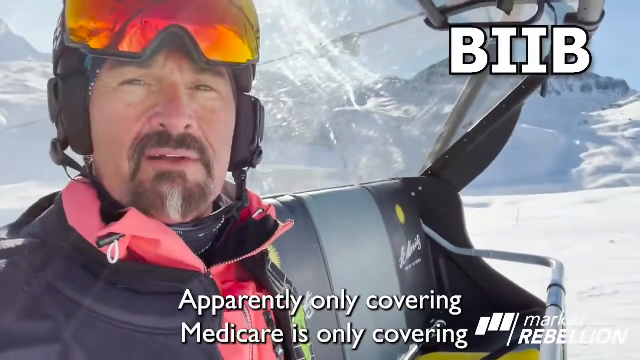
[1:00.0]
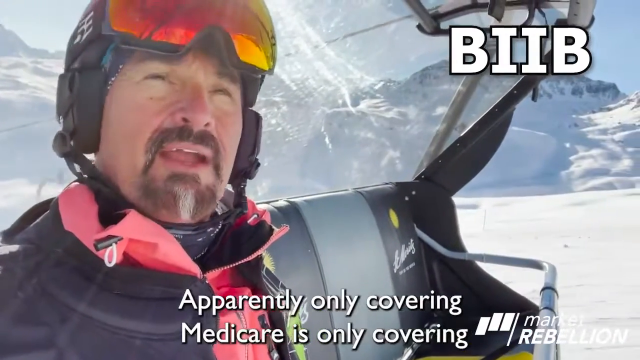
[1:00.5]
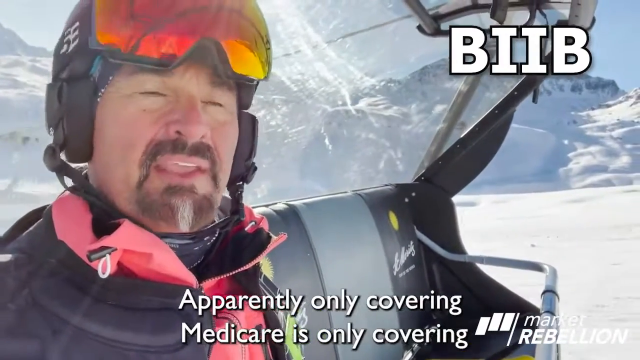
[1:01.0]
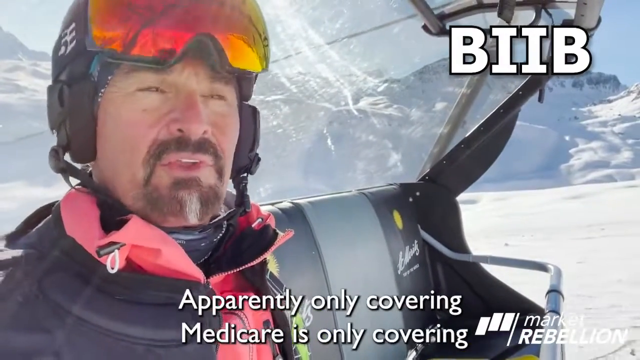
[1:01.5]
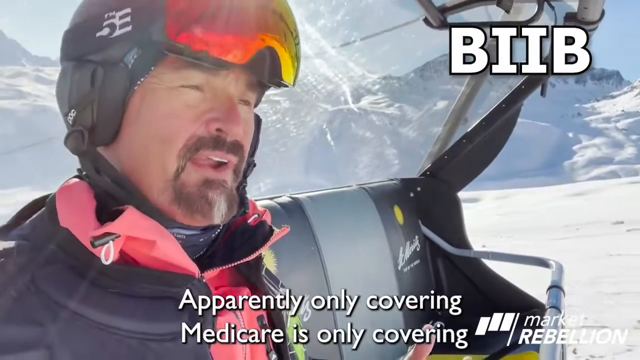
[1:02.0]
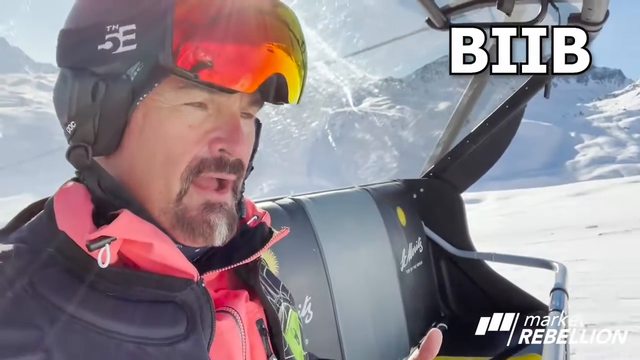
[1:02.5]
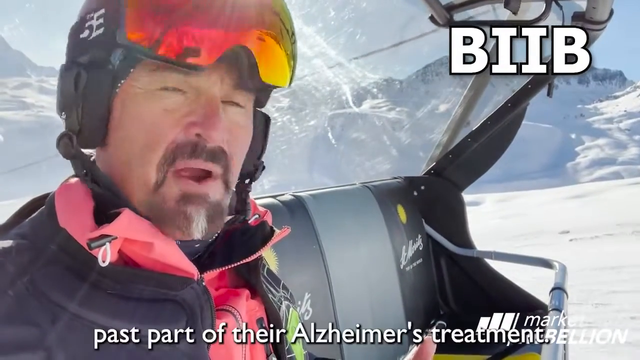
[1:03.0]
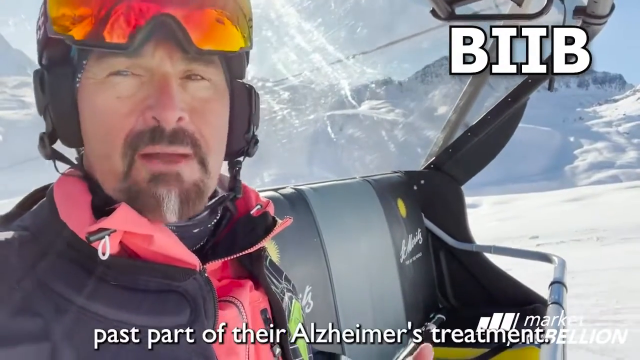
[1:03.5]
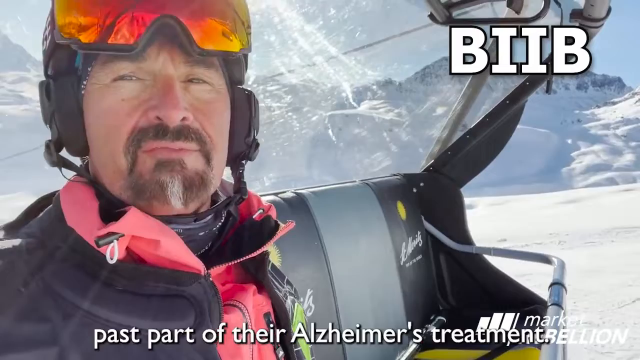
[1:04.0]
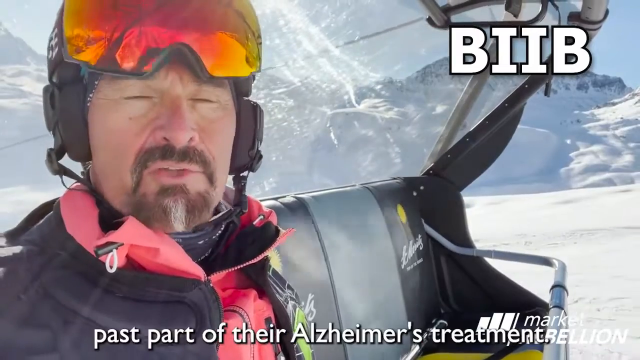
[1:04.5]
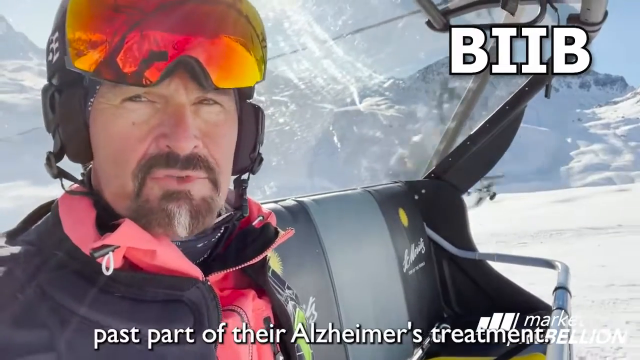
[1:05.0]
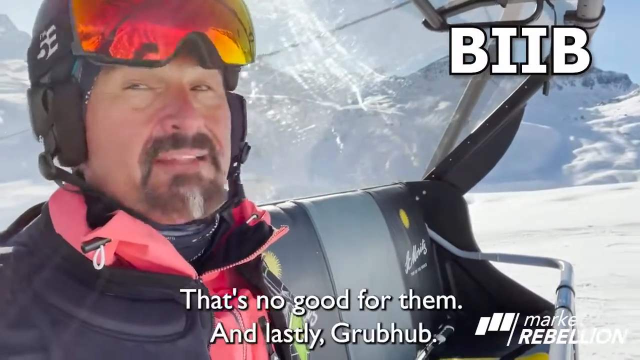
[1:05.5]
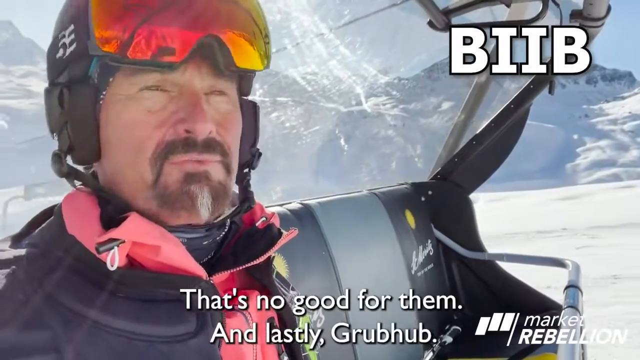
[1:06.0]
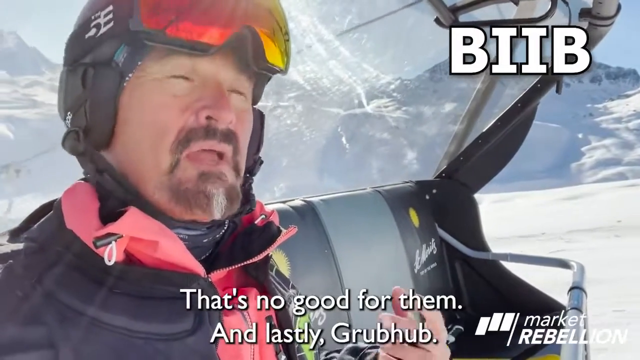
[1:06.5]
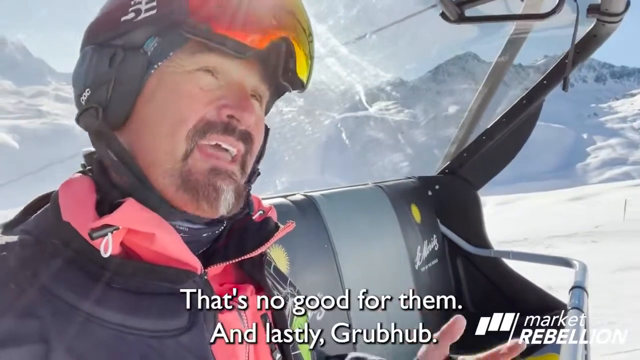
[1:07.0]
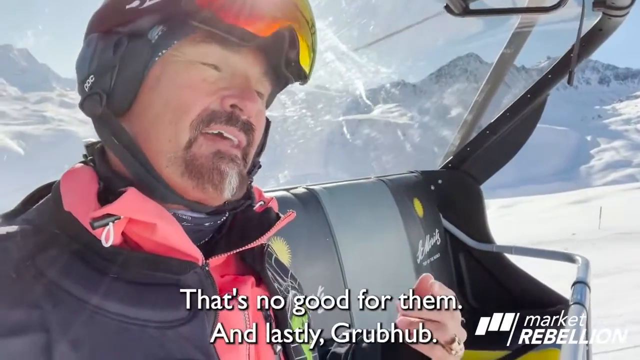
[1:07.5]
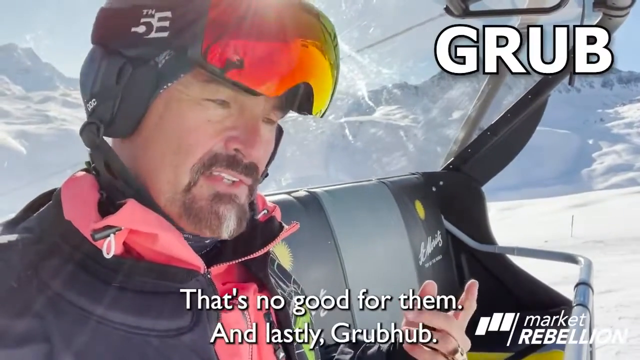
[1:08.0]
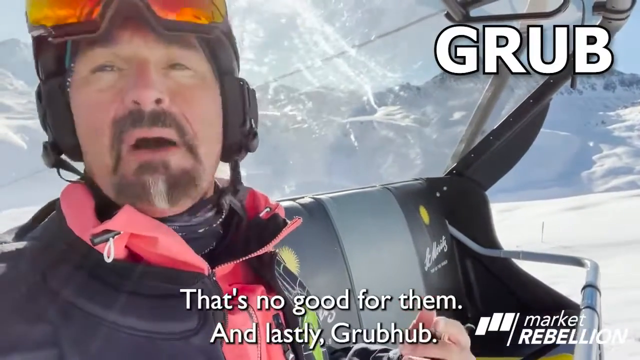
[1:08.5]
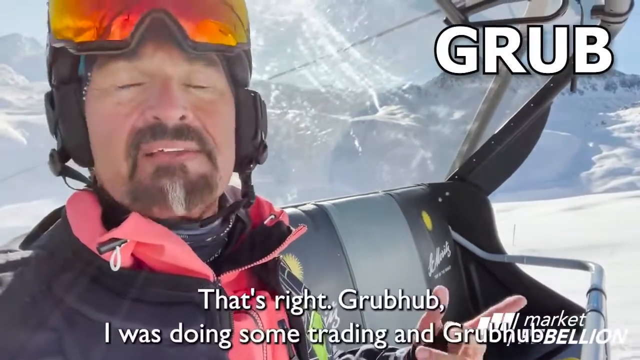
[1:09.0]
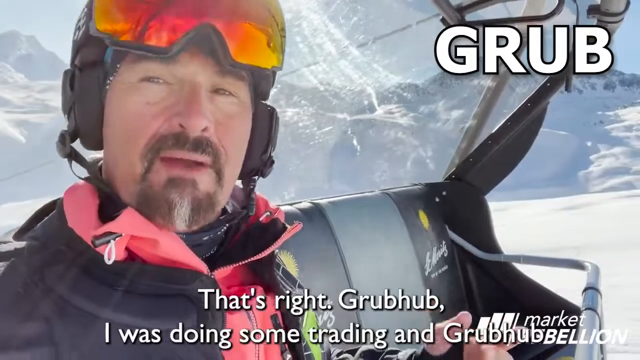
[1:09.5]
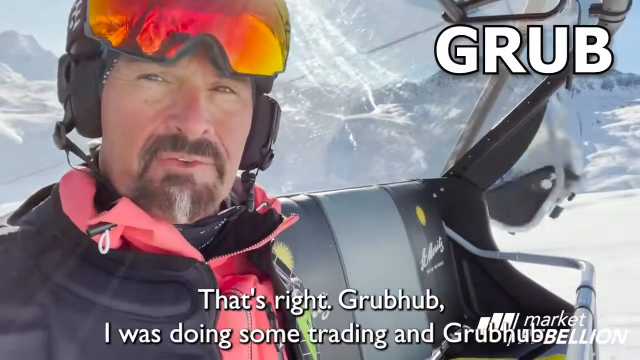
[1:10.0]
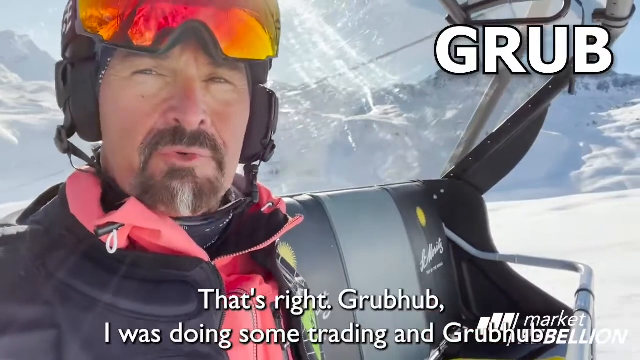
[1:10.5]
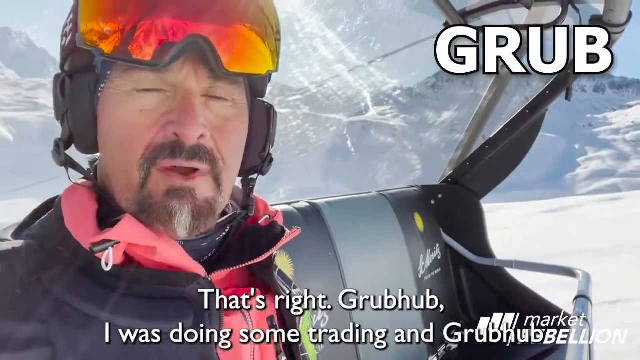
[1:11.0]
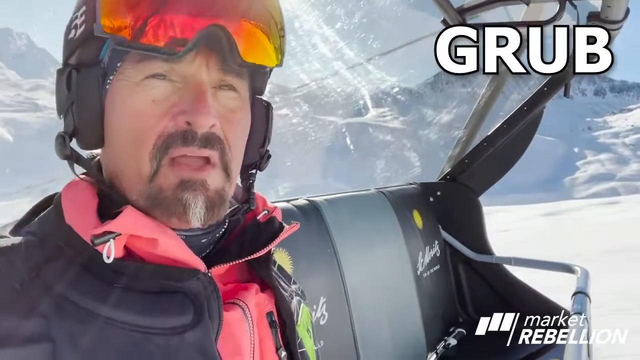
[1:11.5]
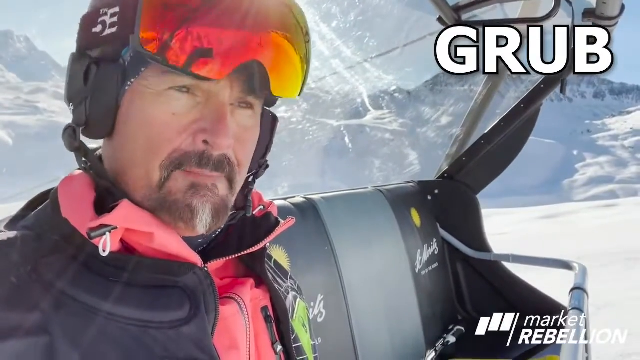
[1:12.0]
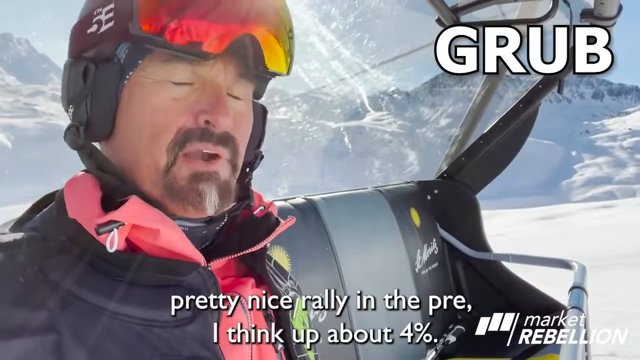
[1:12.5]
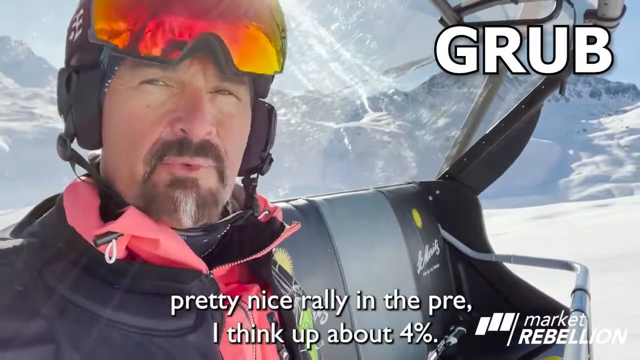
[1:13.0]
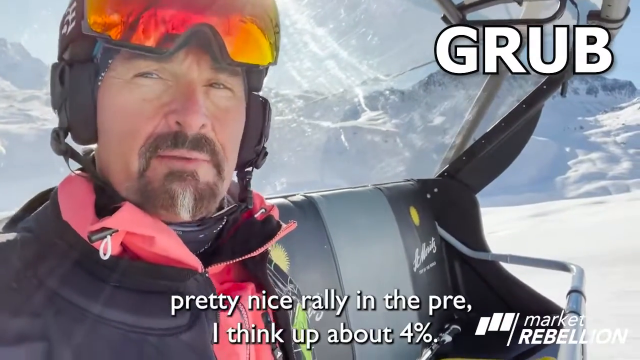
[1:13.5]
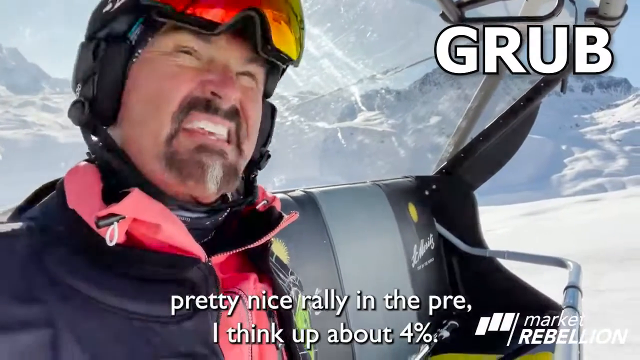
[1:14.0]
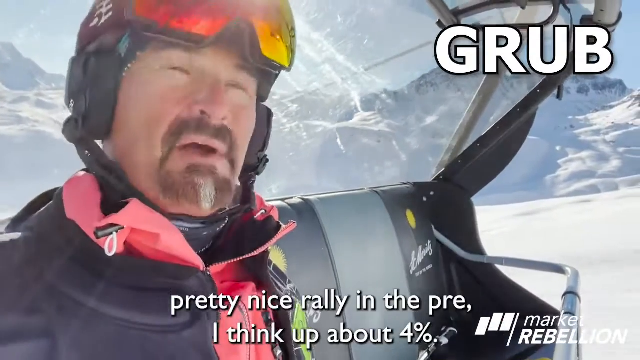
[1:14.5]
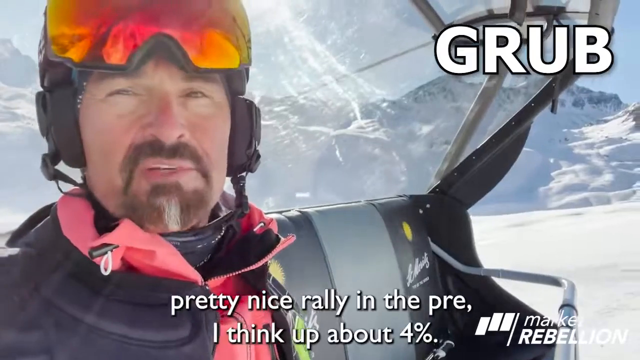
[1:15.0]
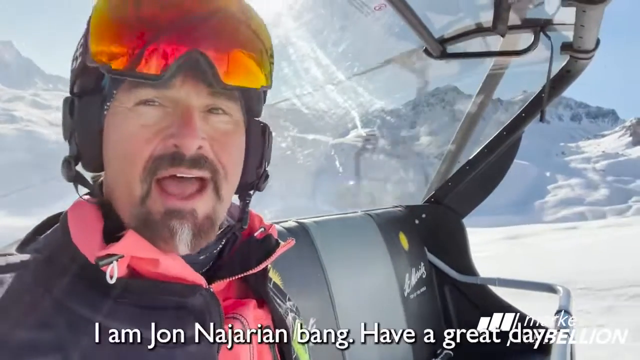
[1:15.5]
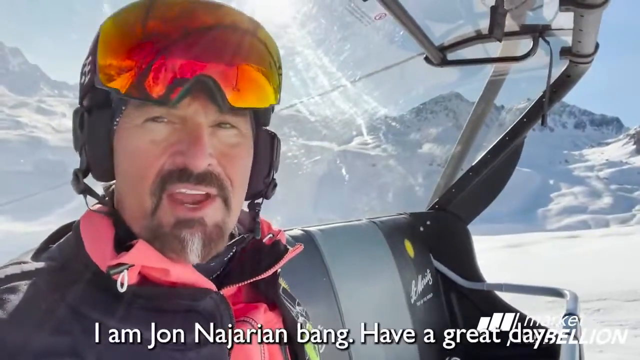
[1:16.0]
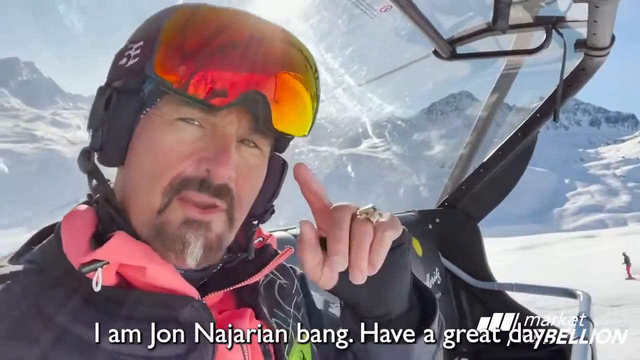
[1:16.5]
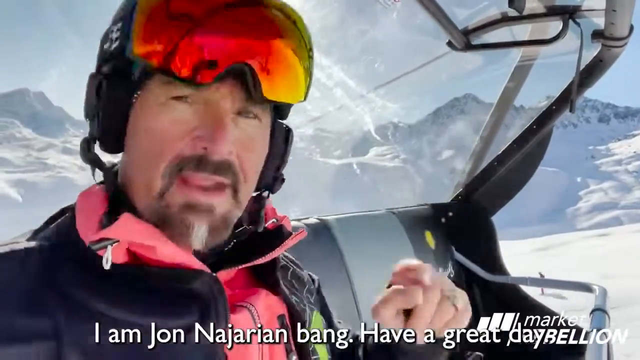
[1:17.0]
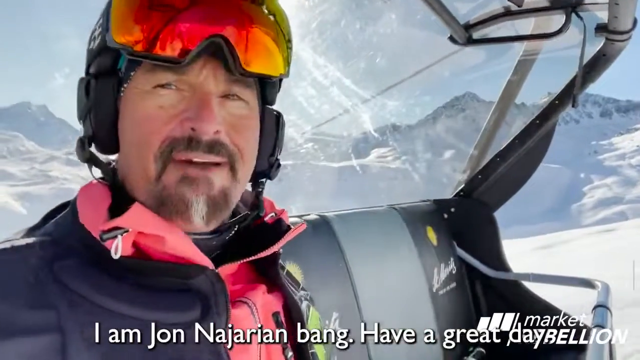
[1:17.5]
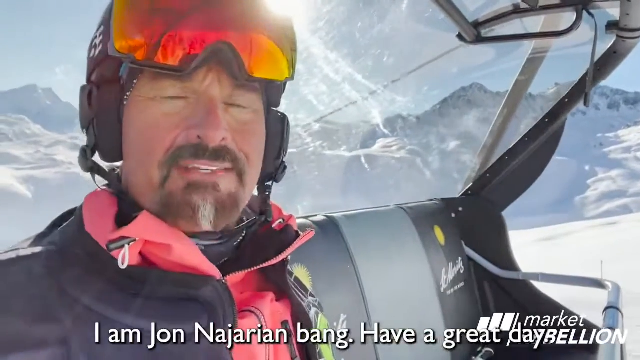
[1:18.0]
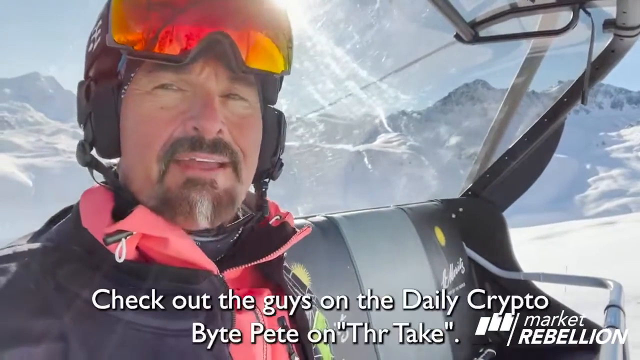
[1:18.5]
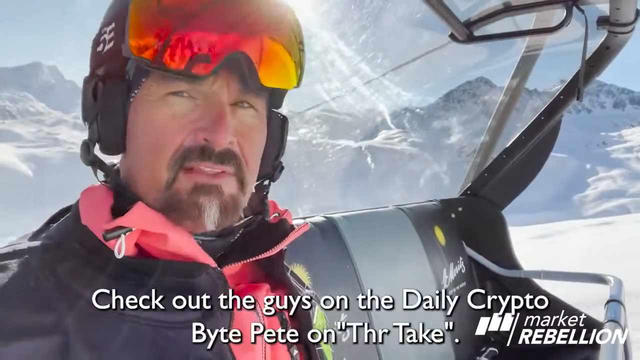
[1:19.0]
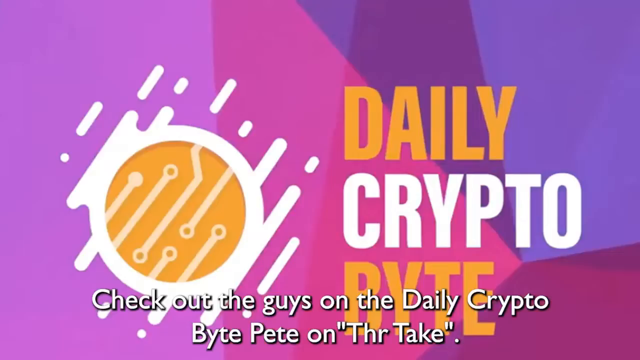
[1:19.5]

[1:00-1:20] Captions continue about stocks: "apparently only covering Medicare", "that's no good for them", "and lastly Grubhub that's right Grubhub", "pretty nice rally in the pre", "I am John Narajan" and "have a great day".